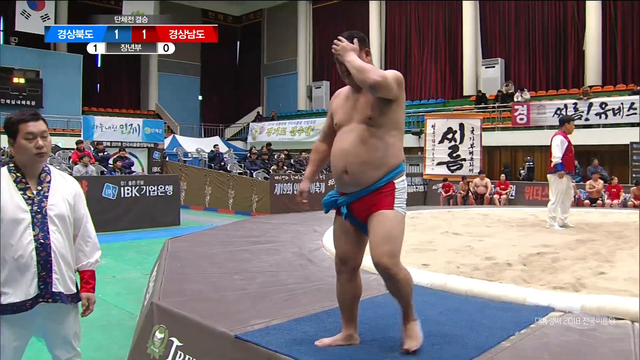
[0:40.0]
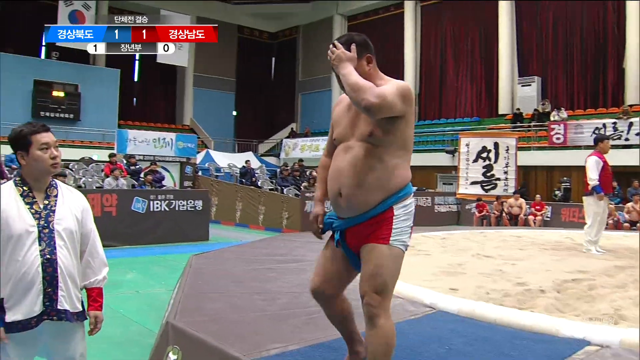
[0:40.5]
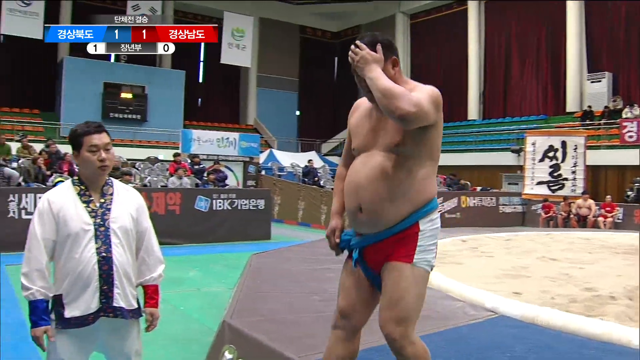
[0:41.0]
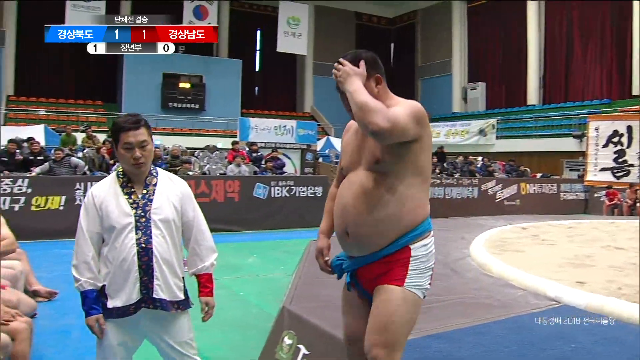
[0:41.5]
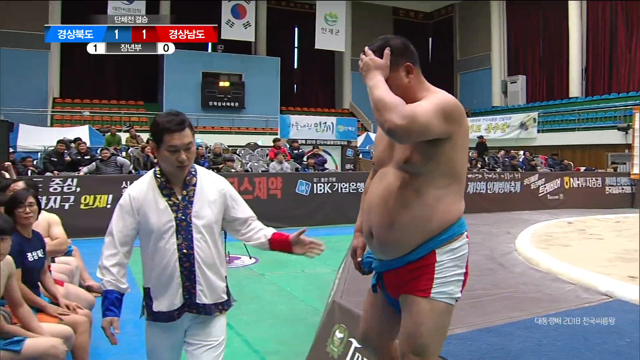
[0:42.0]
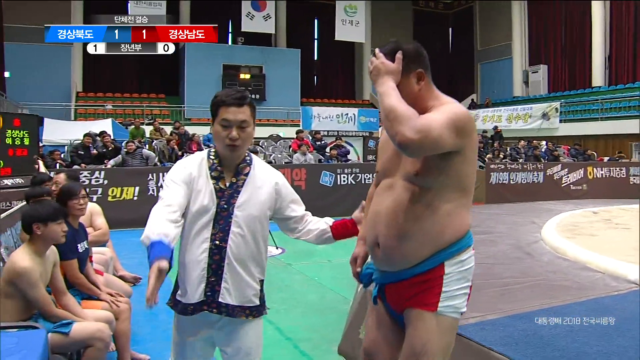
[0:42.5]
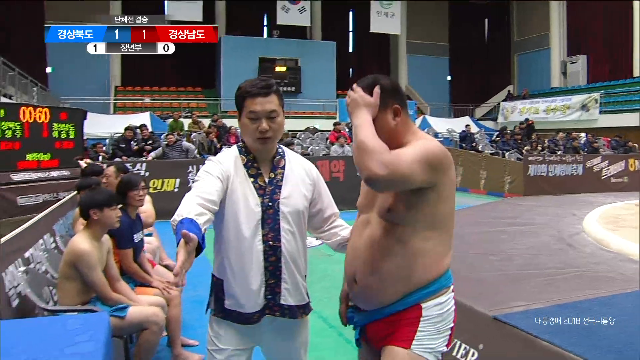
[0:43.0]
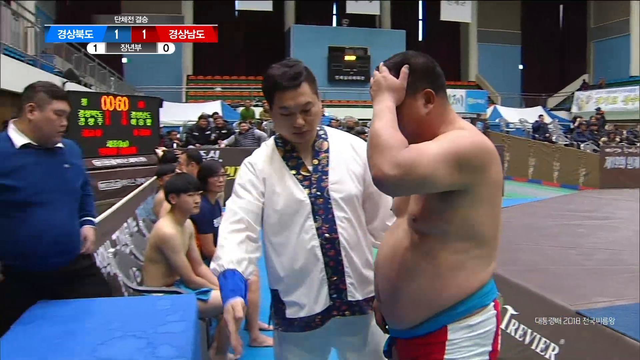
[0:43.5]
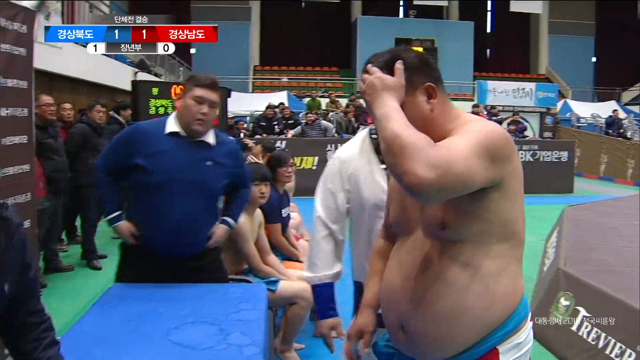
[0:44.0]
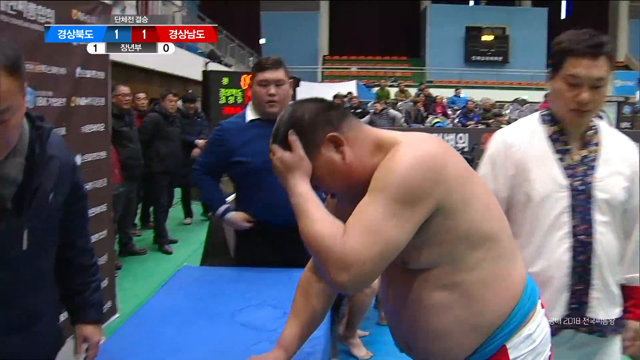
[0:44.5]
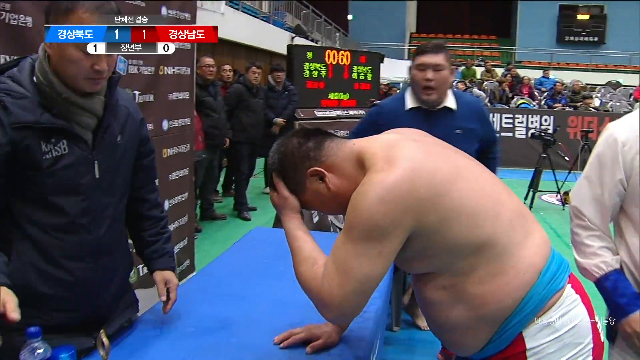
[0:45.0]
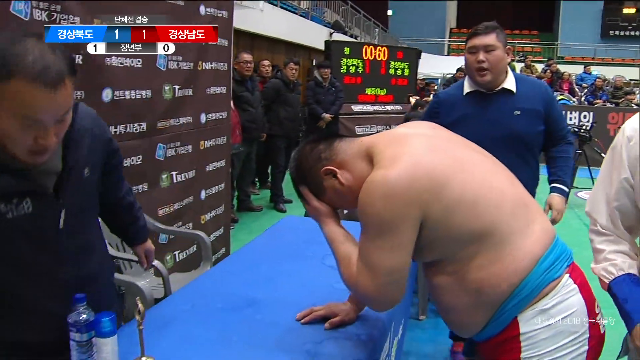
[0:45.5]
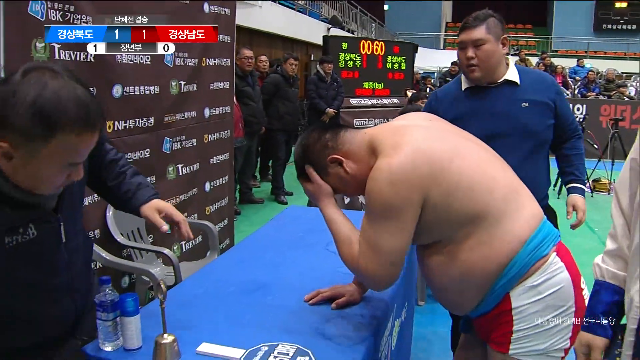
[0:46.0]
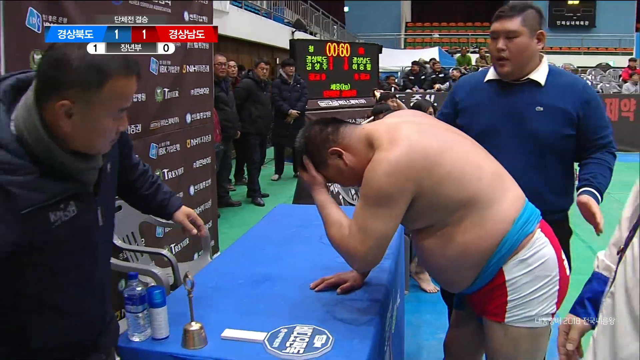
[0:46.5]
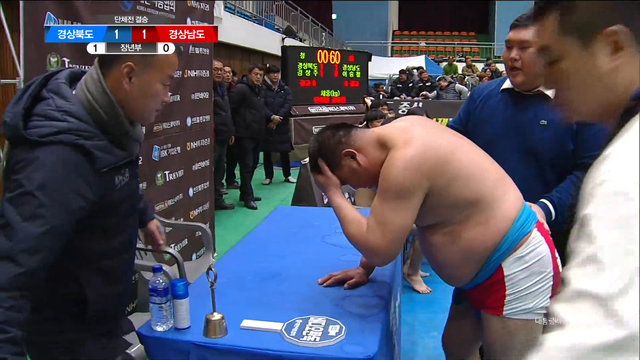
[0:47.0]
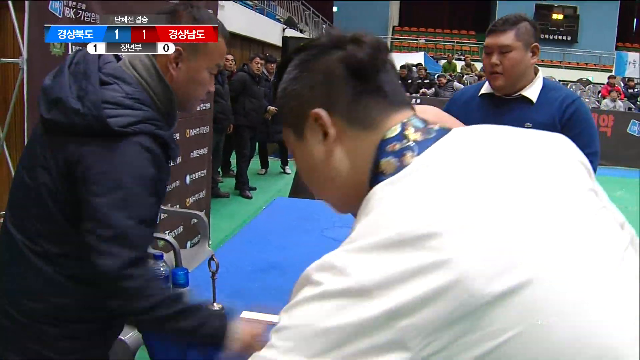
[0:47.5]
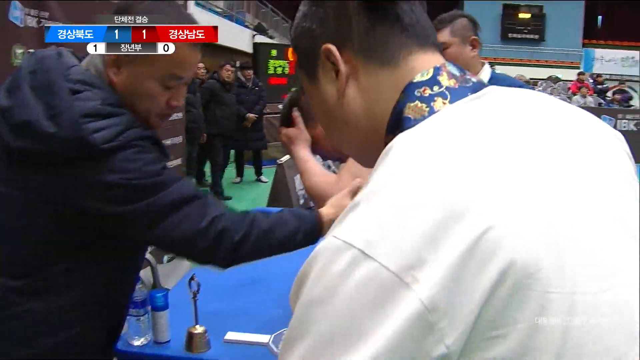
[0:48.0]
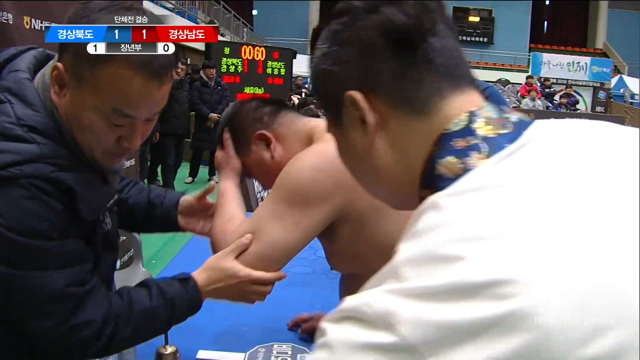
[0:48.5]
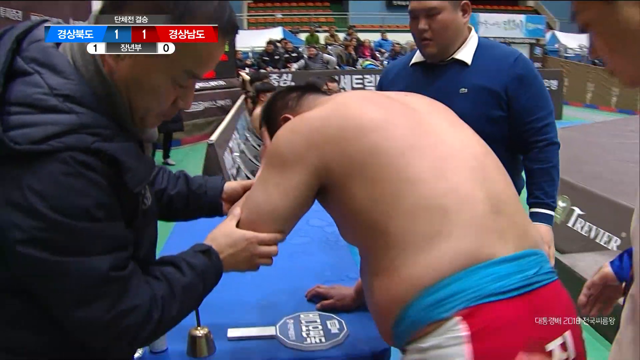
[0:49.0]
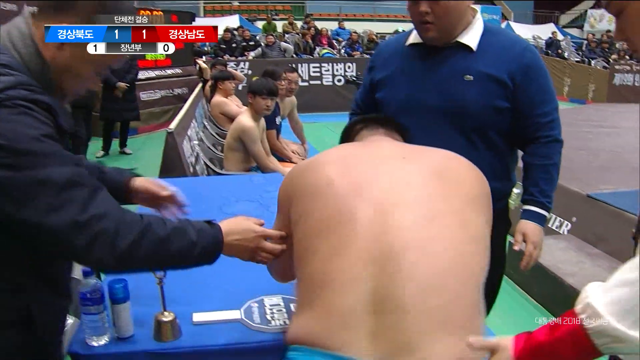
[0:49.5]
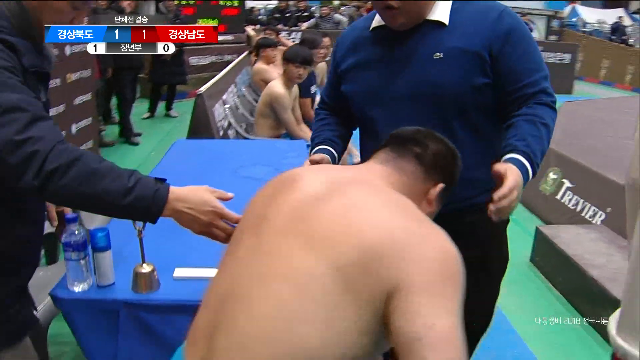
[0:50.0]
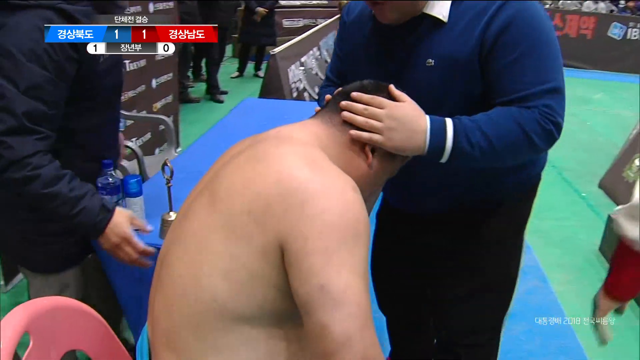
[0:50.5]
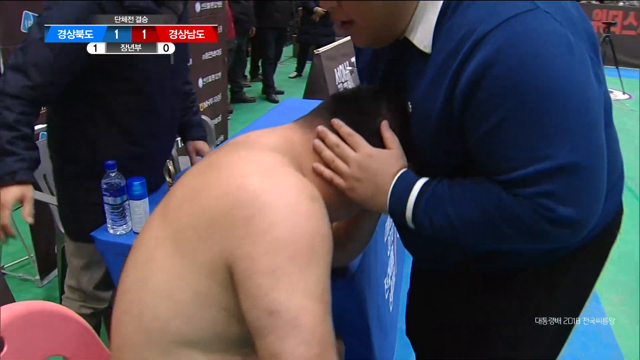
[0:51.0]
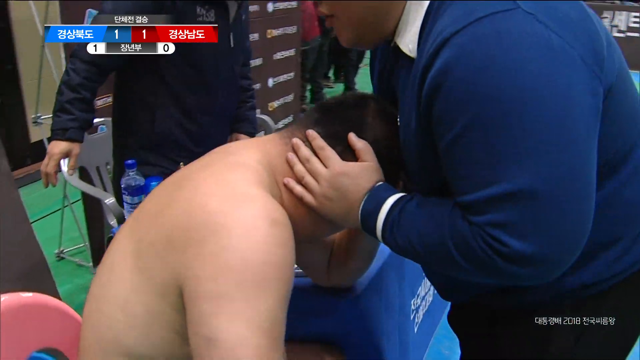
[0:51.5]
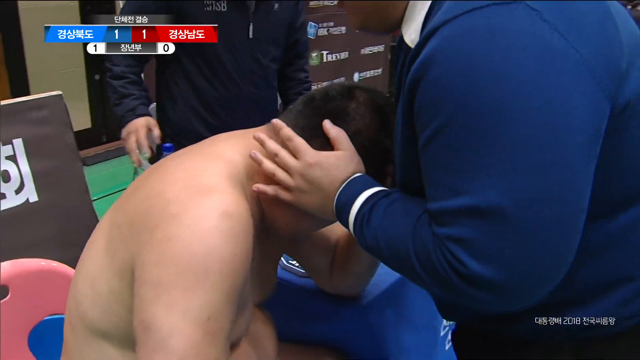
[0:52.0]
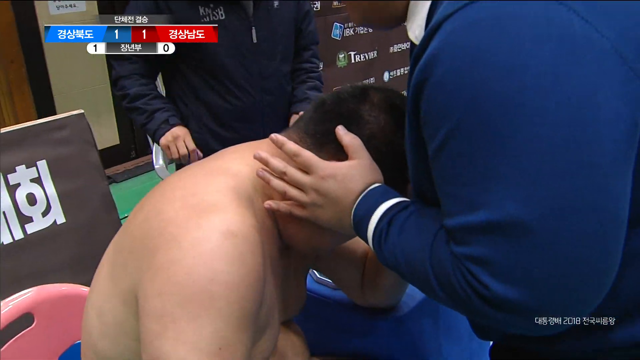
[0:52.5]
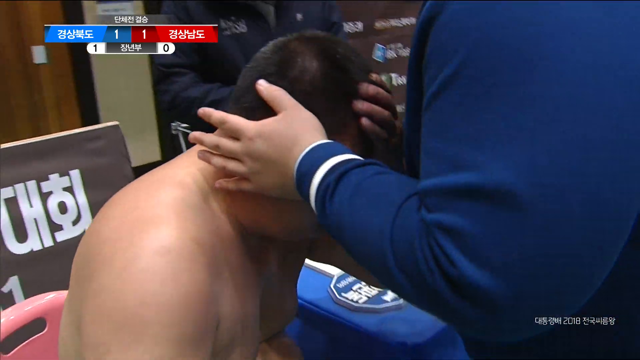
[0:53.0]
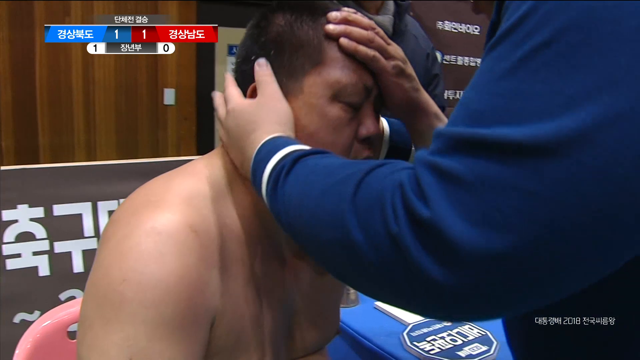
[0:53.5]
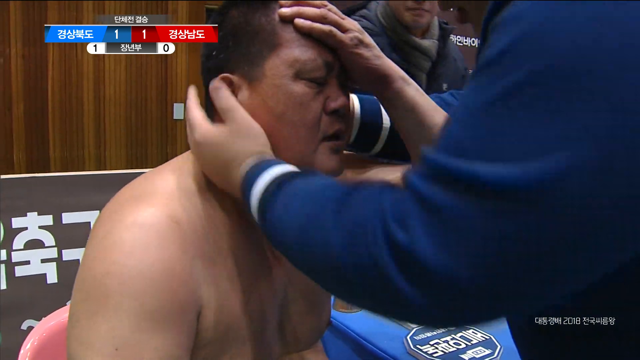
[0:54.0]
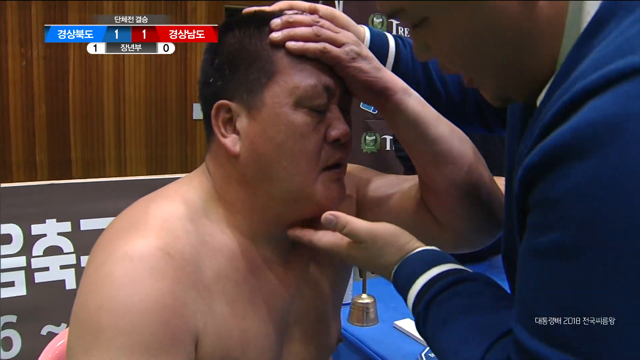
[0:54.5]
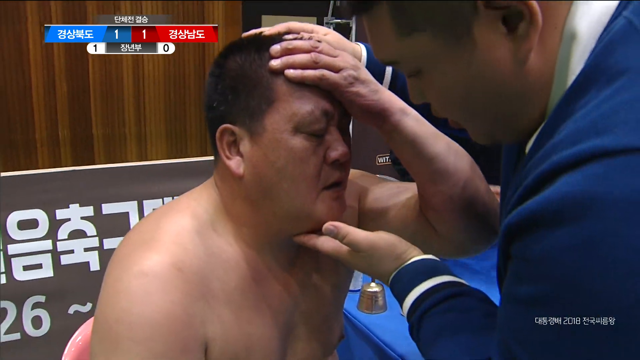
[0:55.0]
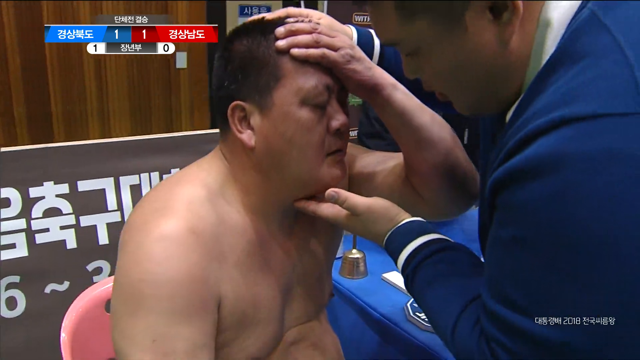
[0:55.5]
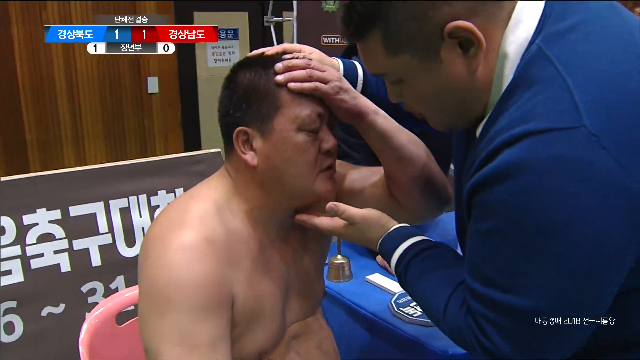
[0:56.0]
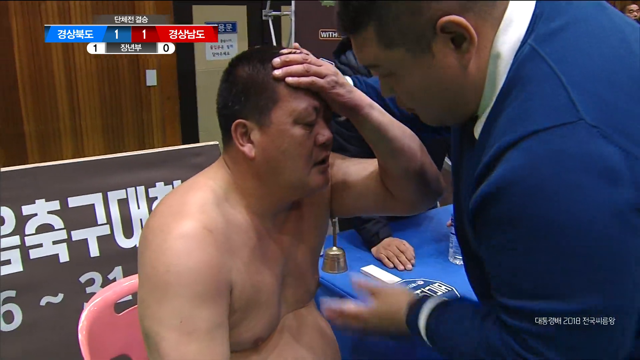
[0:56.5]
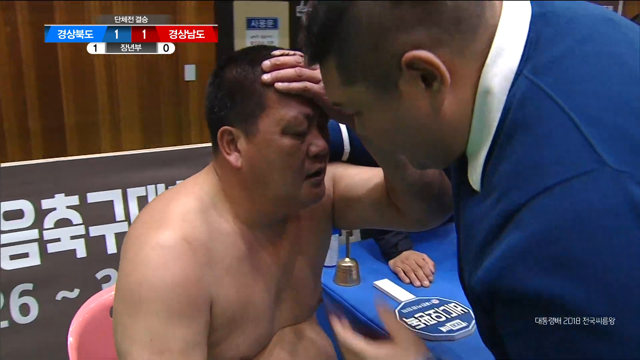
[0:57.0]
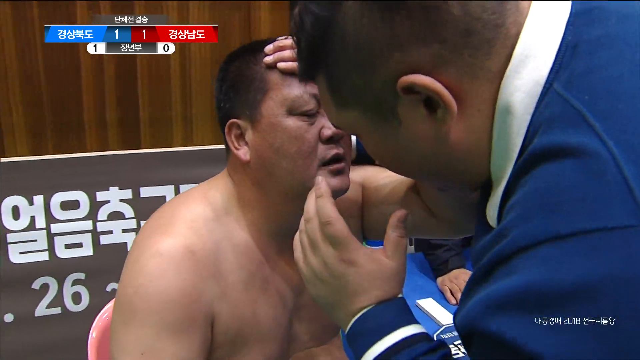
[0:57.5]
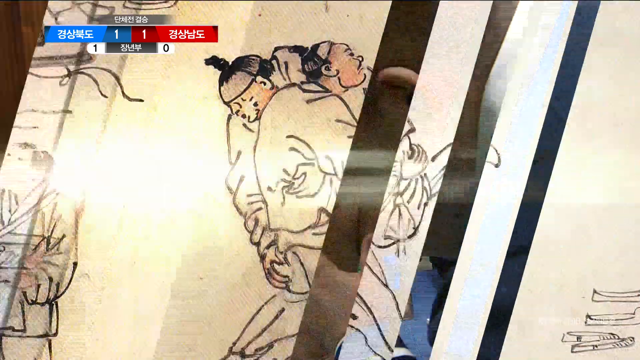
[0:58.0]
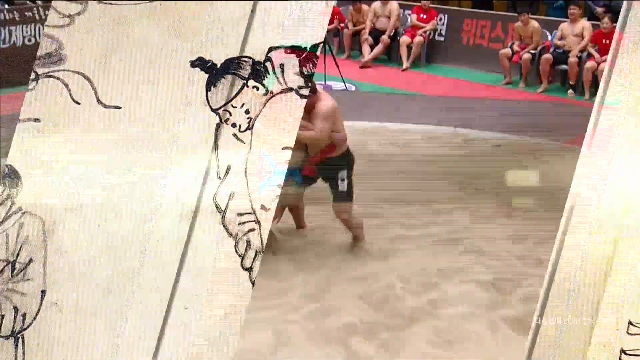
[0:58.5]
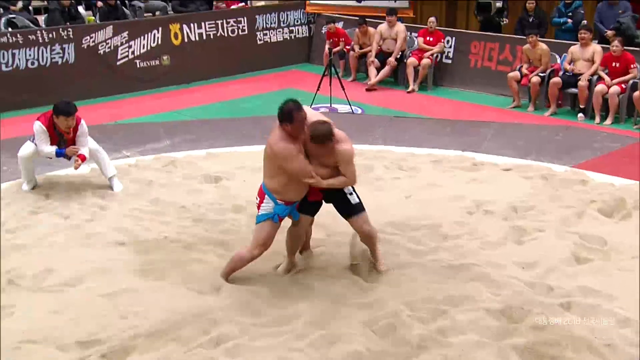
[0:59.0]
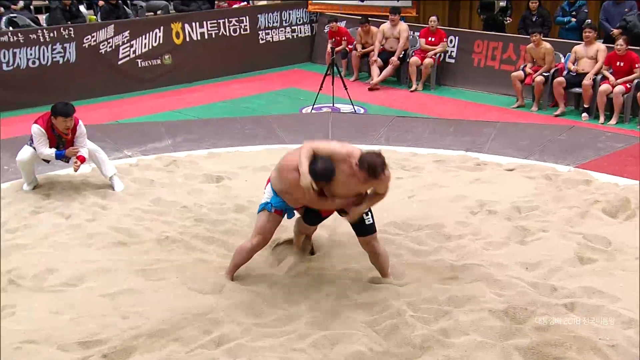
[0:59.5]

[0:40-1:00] As the sumo wrestler begins to walk off the mat, a man in a white jacket and white pants helps him off the stage. There are several chairs with several people sitting in them. The wrestler walks up to a blue table and hunches over it, his right hand resting on the table and his left hand on his forehead. It looks like three men are standing around him, helping him down to a seat so he can sit. One of the men holds the wrestler's head with both hands. The wrestler leans back, sitting back, his left hand still on his forehead, while the person helping him now has his left hand under the wrestler's chin and appears to be talking to him, maybe asking him questions.